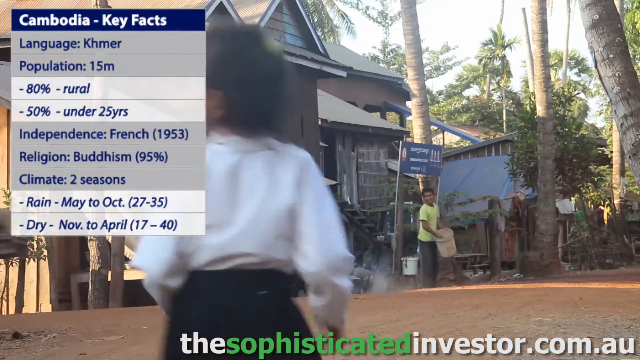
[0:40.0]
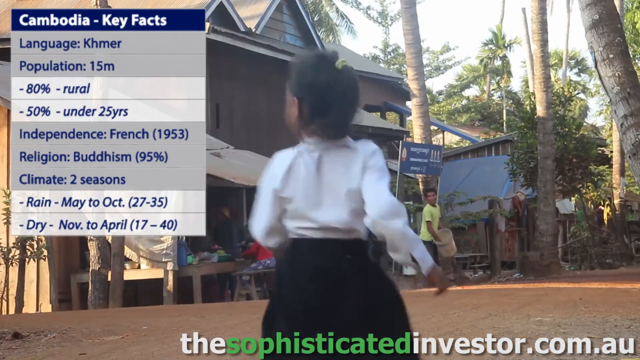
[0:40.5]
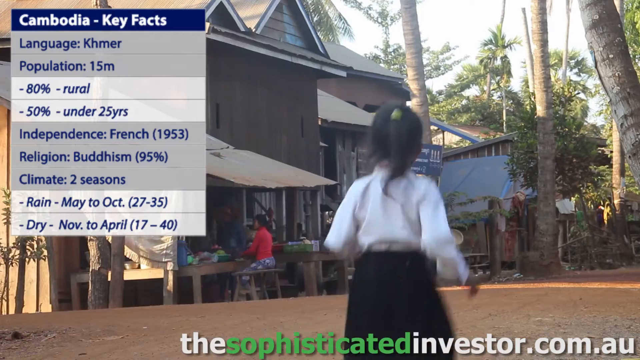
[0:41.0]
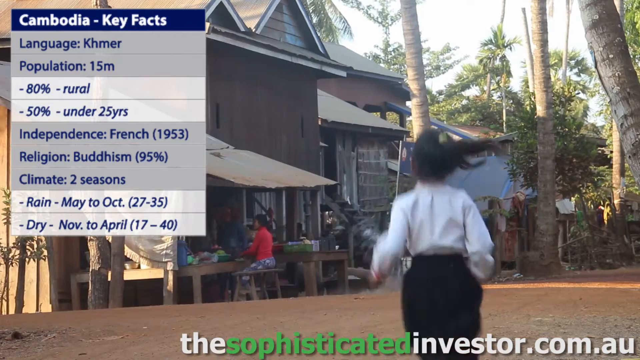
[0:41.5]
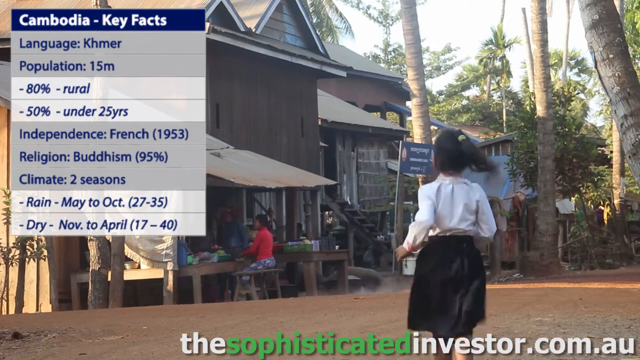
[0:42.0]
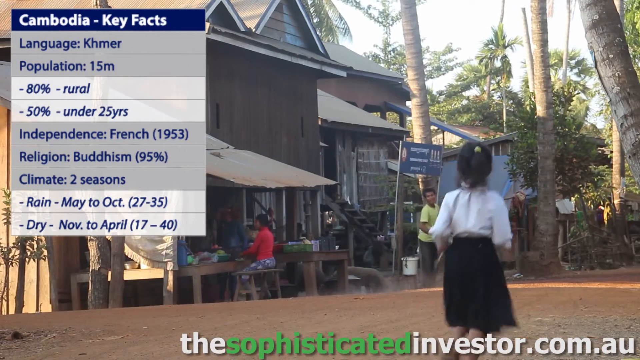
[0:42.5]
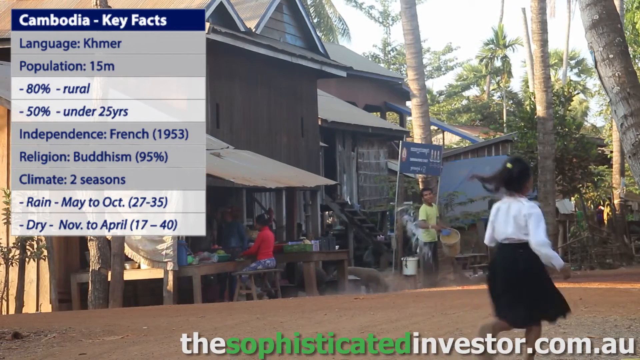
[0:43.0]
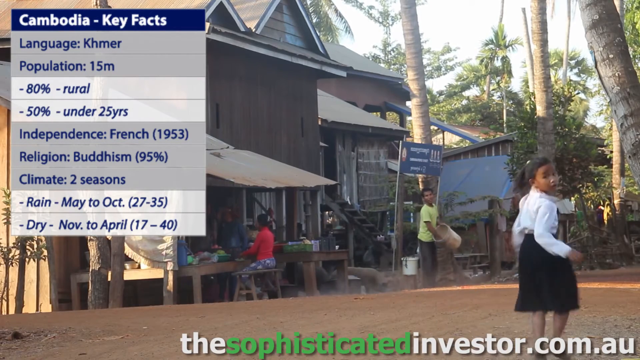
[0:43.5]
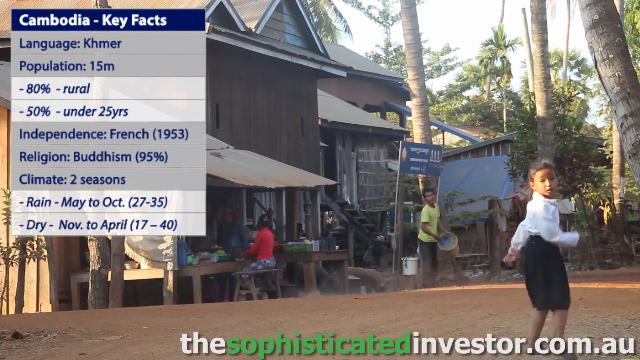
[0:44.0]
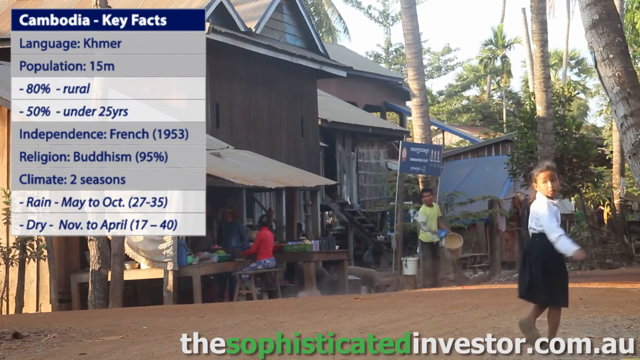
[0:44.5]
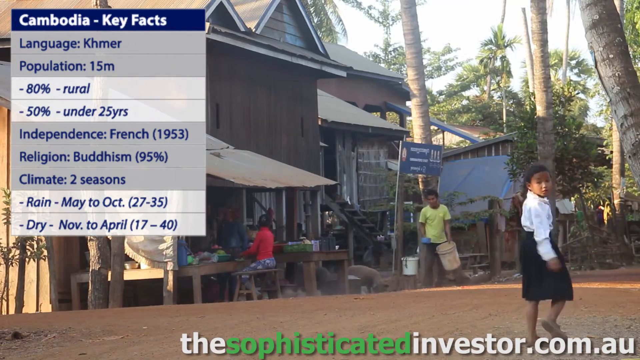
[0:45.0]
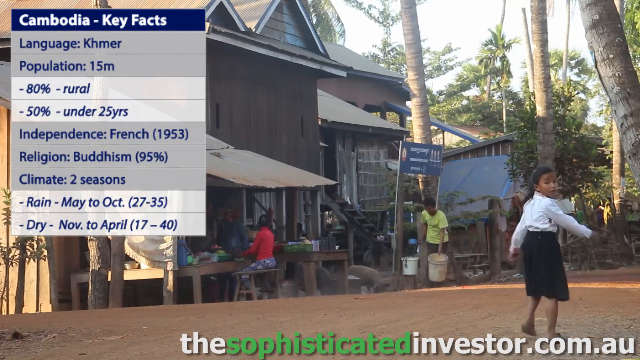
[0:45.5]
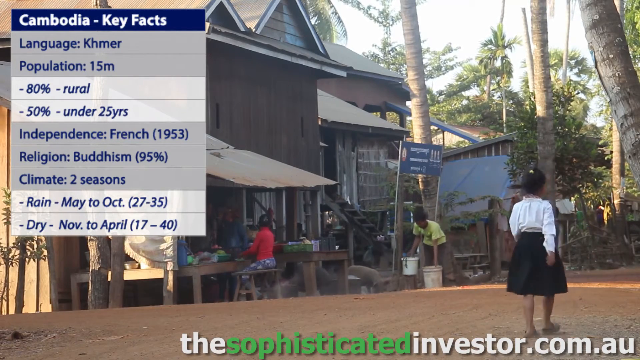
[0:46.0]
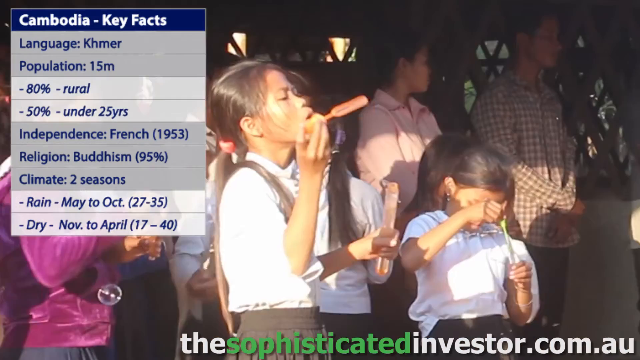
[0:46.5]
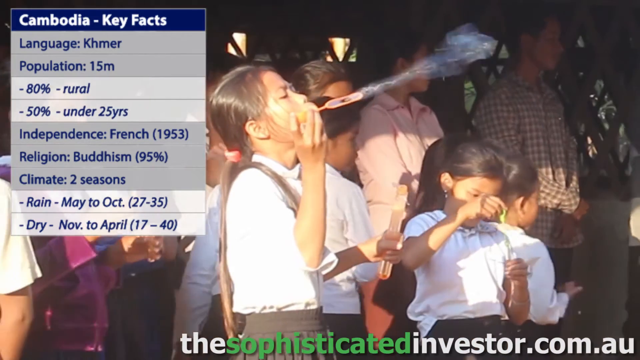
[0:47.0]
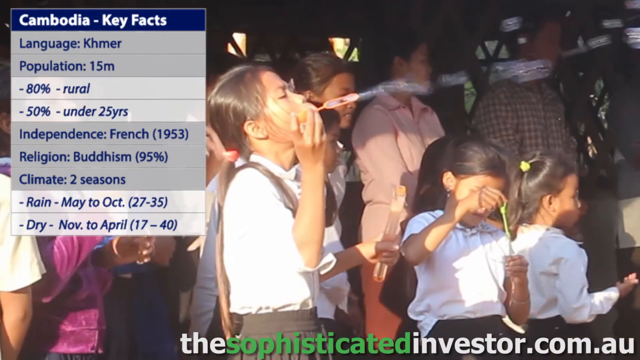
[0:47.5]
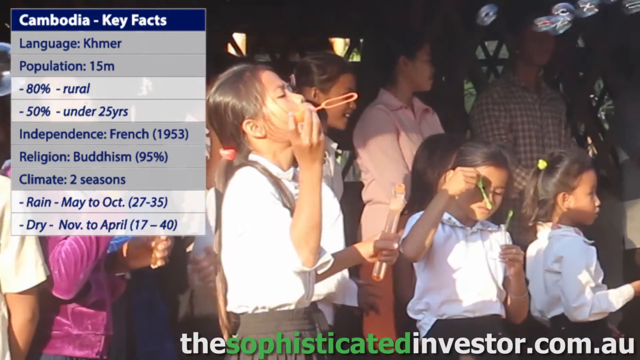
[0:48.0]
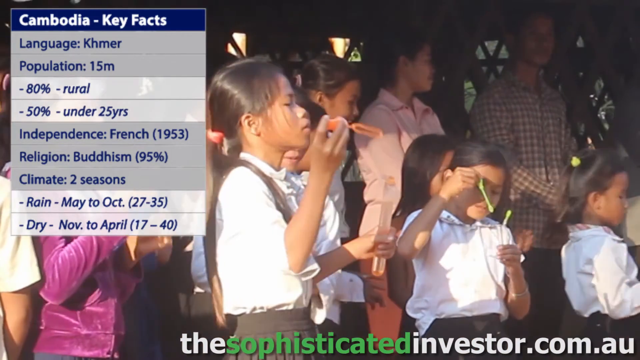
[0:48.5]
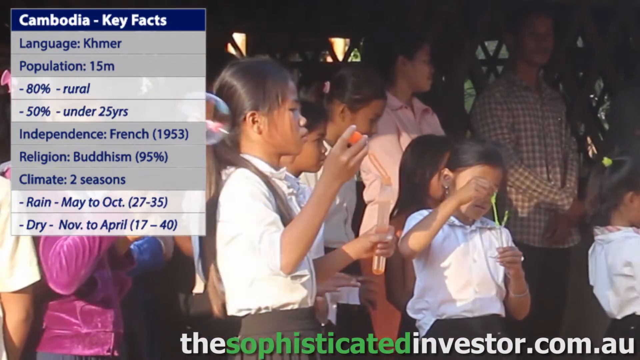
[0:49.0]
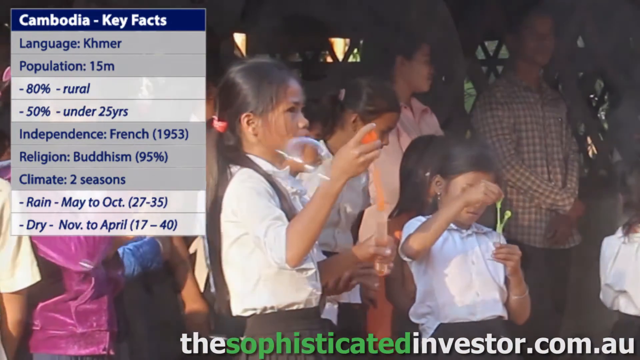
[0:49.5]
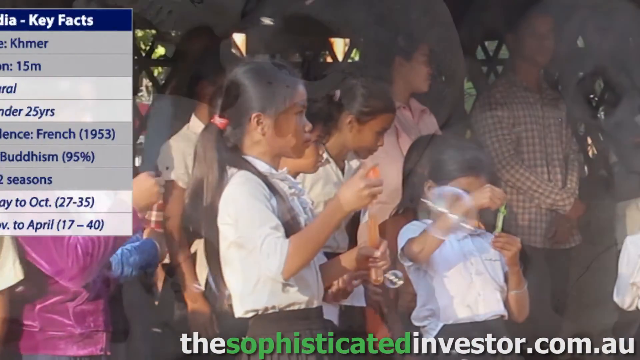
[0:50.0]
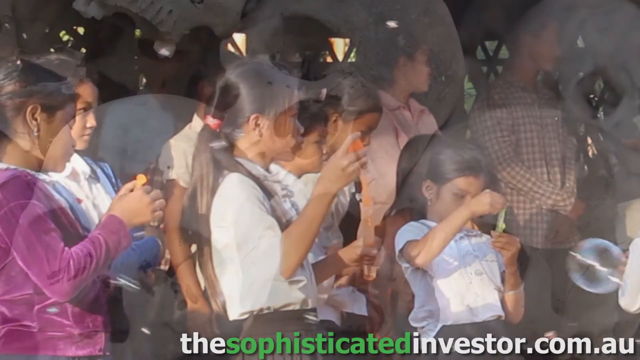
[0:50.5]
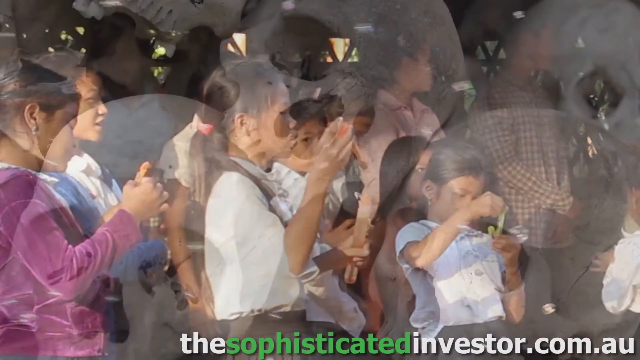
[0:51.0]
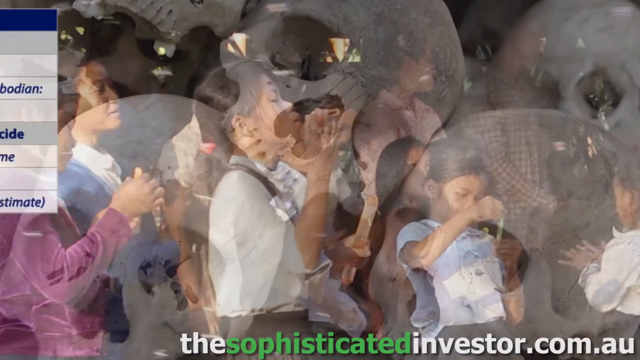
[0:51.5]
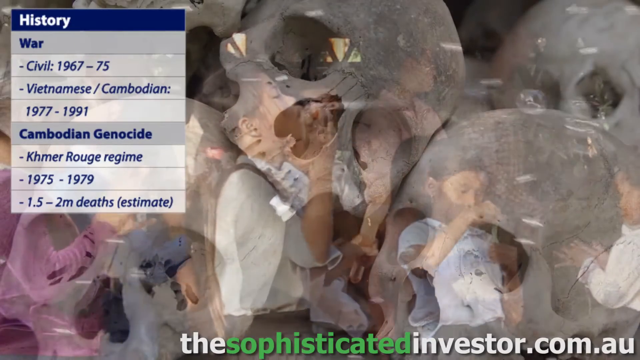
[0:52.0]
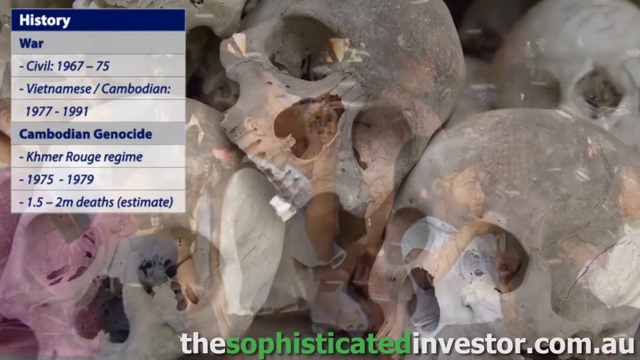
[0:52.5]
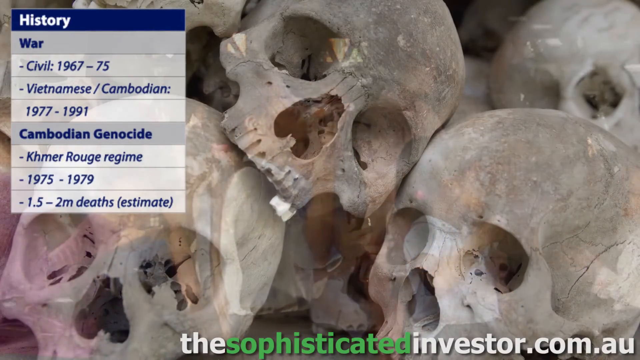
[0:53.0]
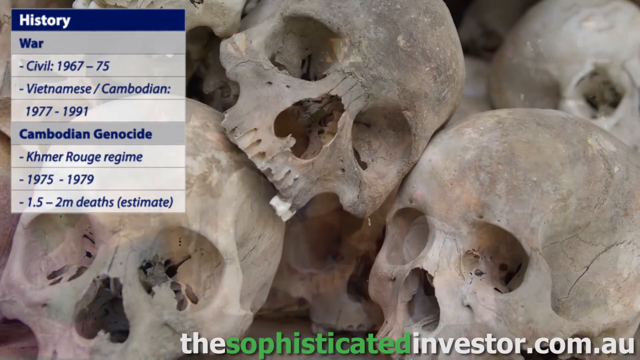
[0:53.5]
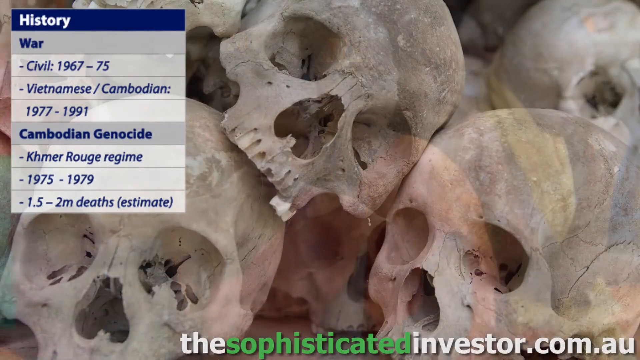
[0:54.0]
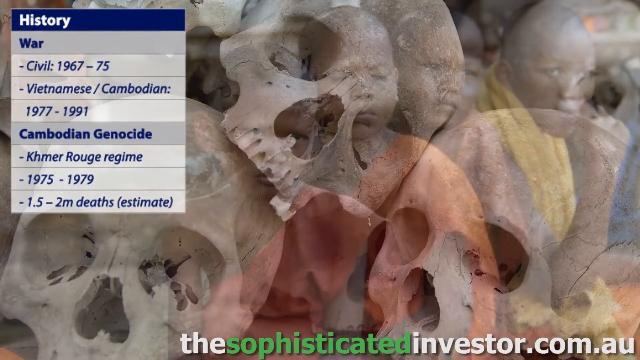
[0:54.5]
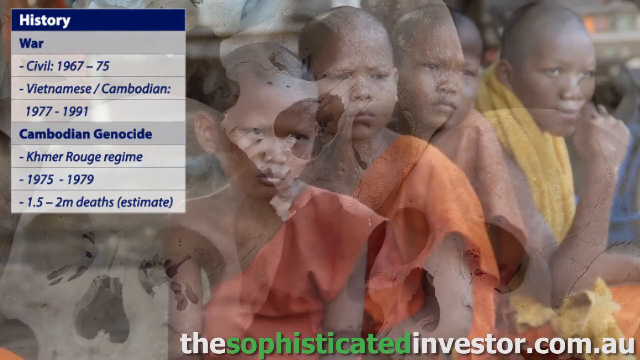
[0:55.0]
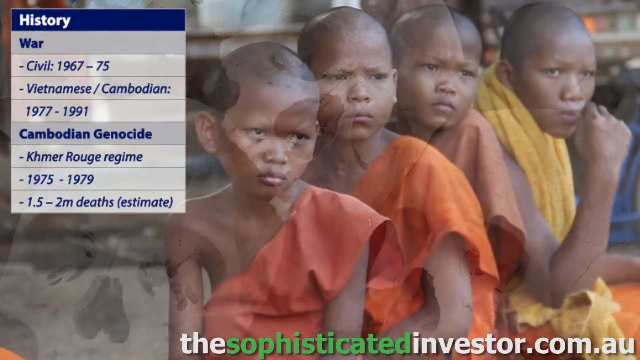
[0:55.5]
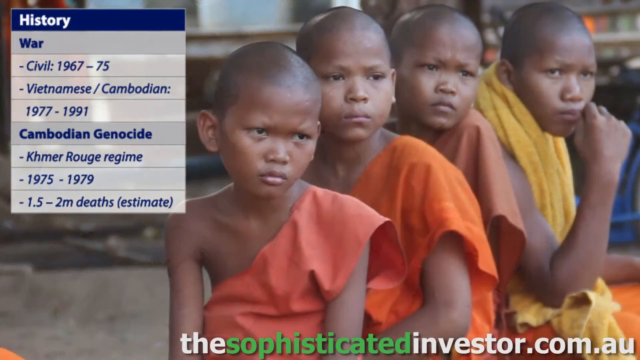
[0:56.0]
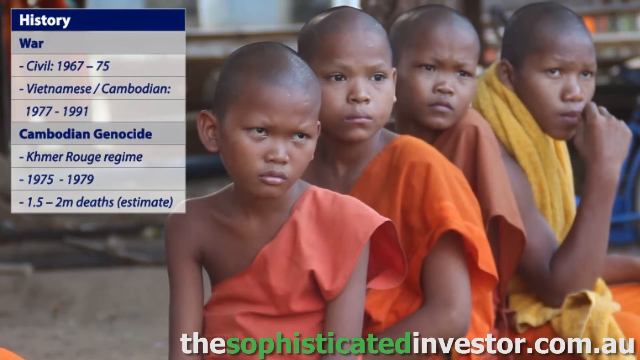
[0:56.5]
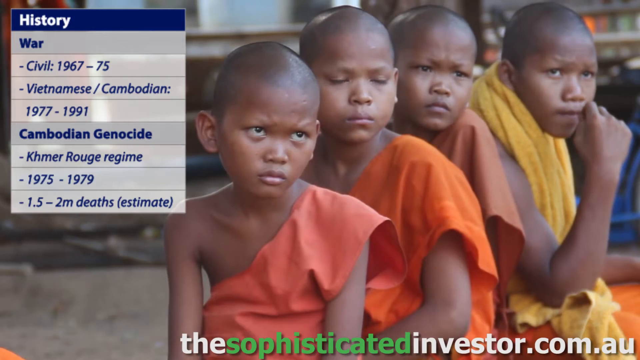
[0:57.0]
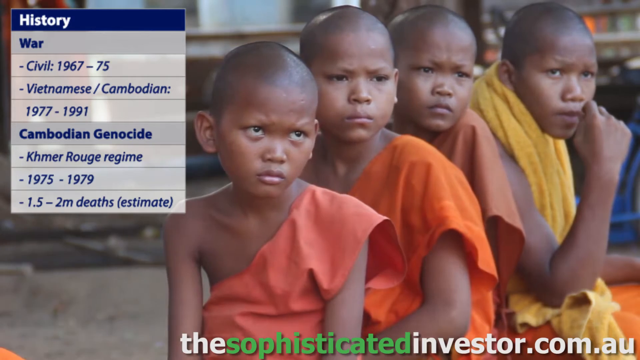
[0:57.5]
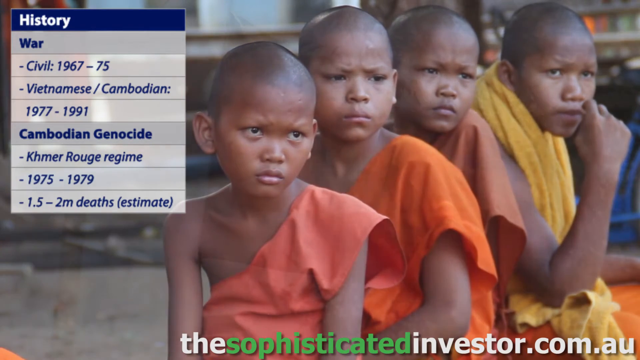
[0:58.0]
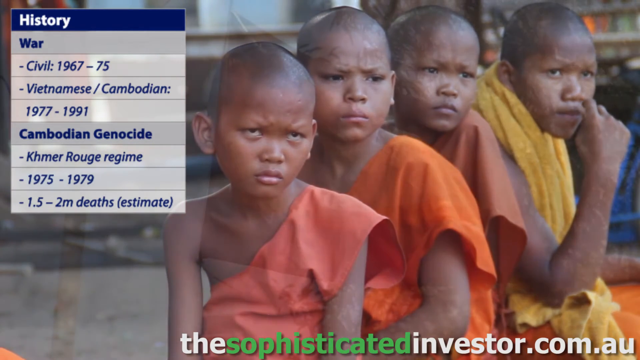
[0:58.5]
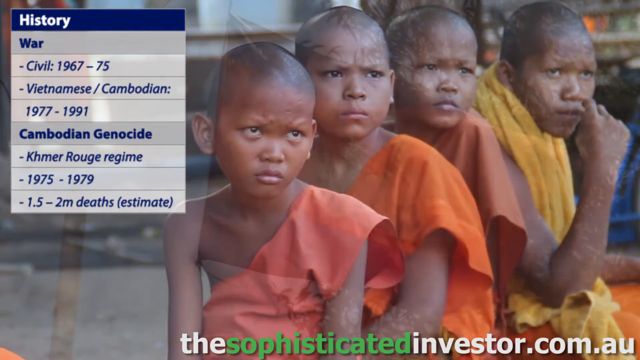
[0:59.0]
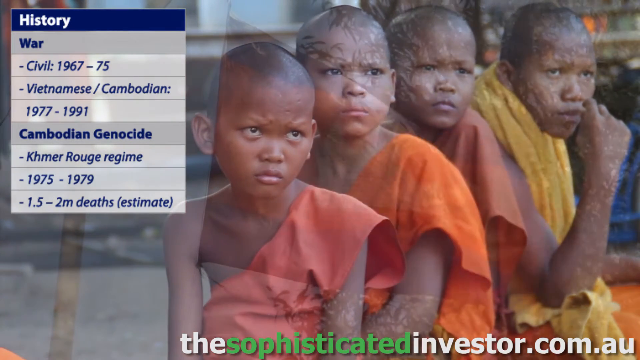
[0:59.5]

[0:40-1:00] An outdoor scene is viewed from the shoulder on the right-hand side of a road that runs roughly from around seven o'clock in the lower left-hand corner to around one to two o'clock on the middle right-hand side. The road appears brown, possibly dirt or just very dirty. Traffic comes toward the camera in the left-hand lane: the first two vehicles look like white full-size vans, followed by a black vehicle that is hard to identify, possibly a small van or SUV. In the right-hand lane, directly to the left of the camera, two children ride a pink bicycle away from the camera; the boy on the back wears a light blue t-shirt with a number nine on the back. The video then transitions to an outdoor view along the side of a building. The building on the left is brown, with a tan awning over it and a few people underneath. A little girl in a long-sleeve white dress shirt and a black skirt comes into the center of the foreground, running down the road, then slows down, stops and looks back over her right shoulder toward the camera.